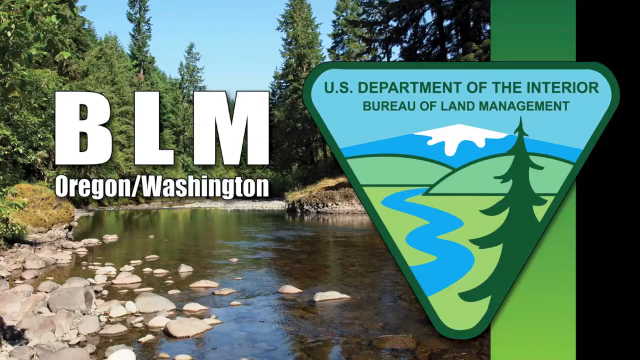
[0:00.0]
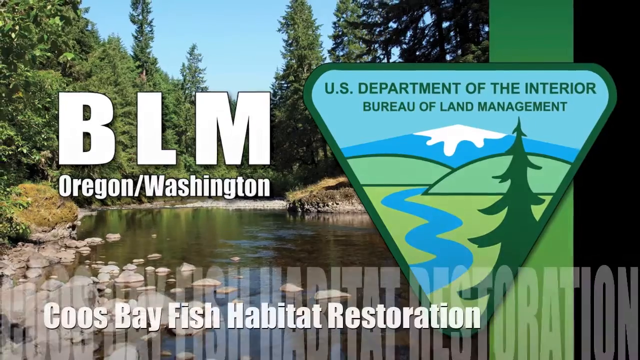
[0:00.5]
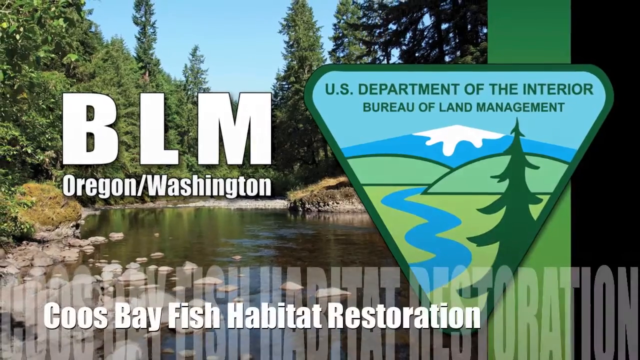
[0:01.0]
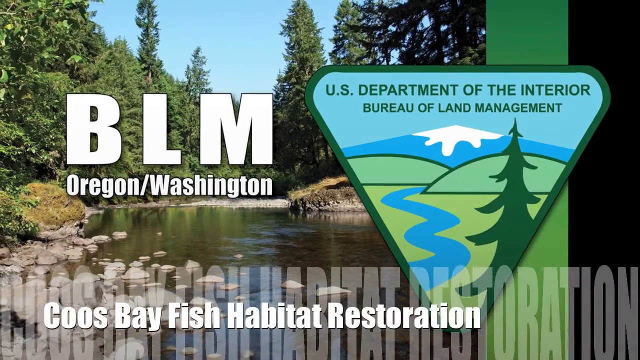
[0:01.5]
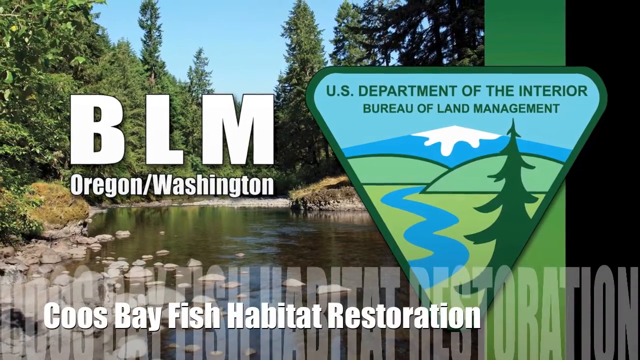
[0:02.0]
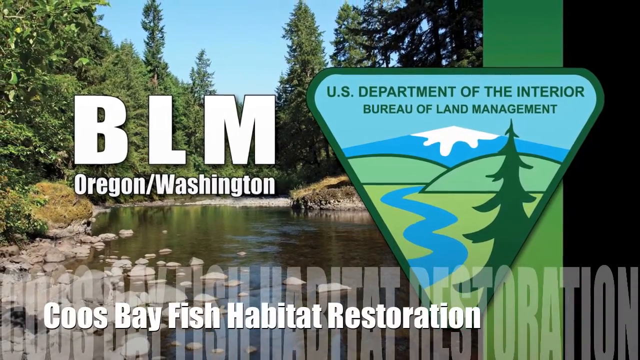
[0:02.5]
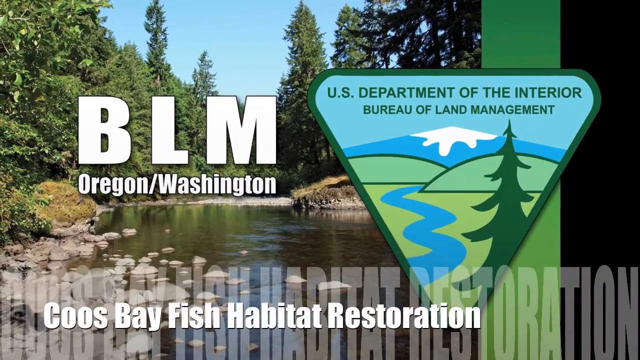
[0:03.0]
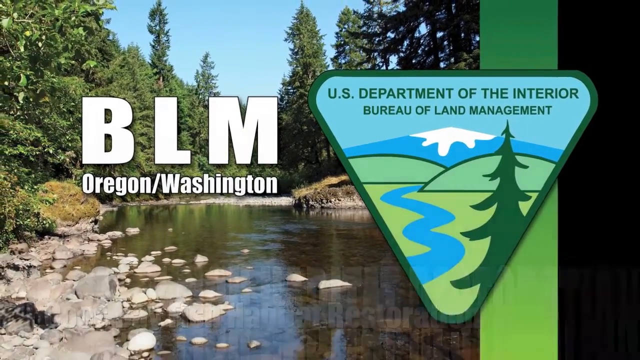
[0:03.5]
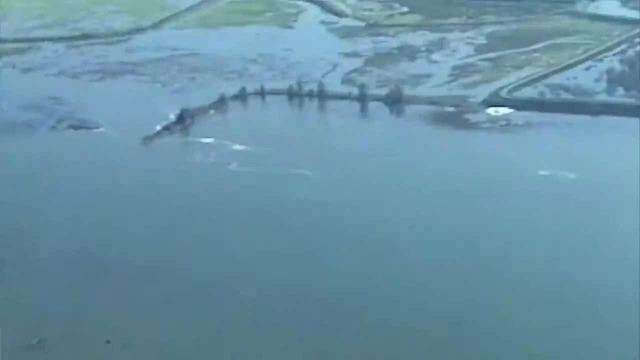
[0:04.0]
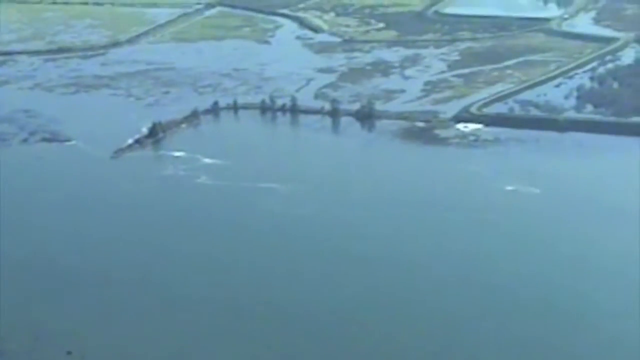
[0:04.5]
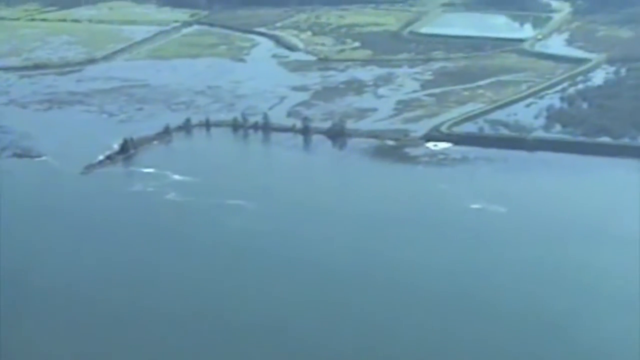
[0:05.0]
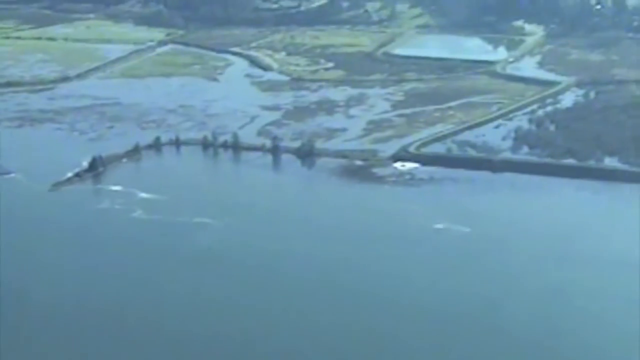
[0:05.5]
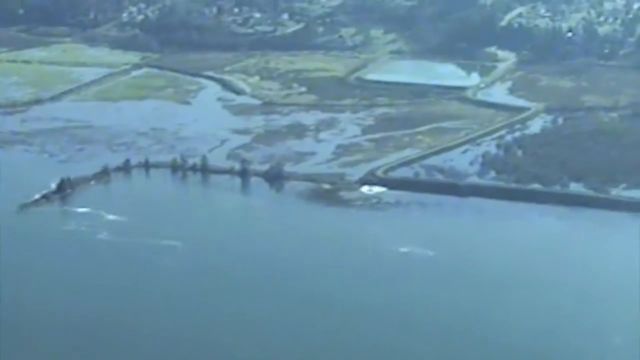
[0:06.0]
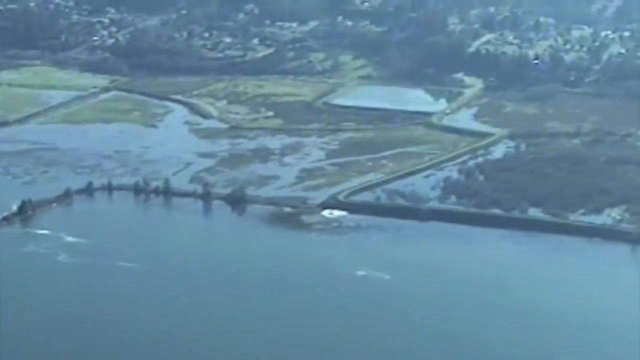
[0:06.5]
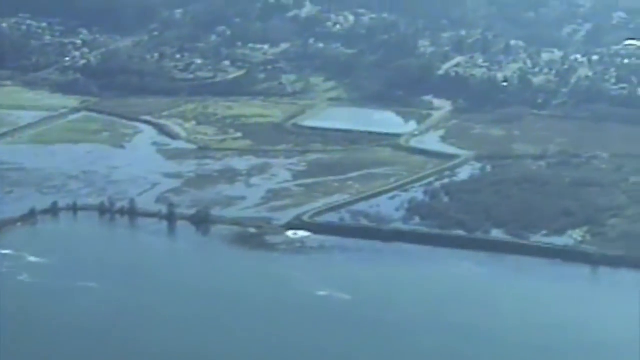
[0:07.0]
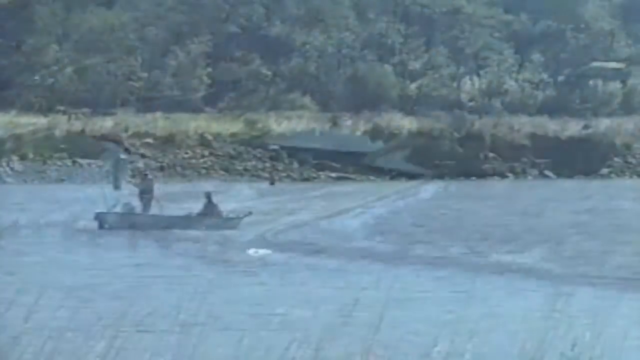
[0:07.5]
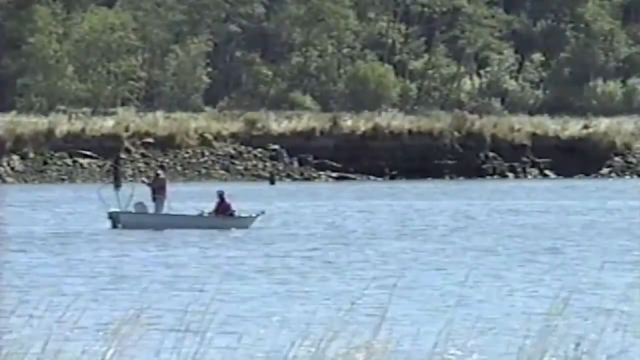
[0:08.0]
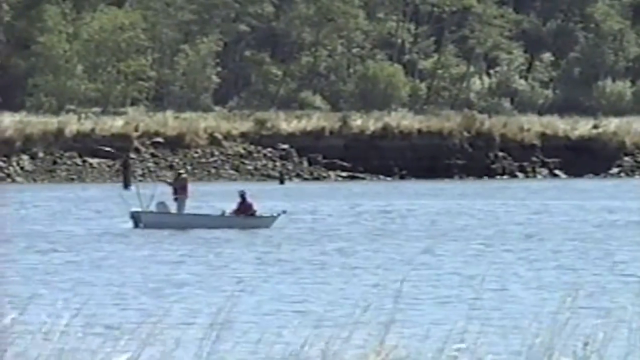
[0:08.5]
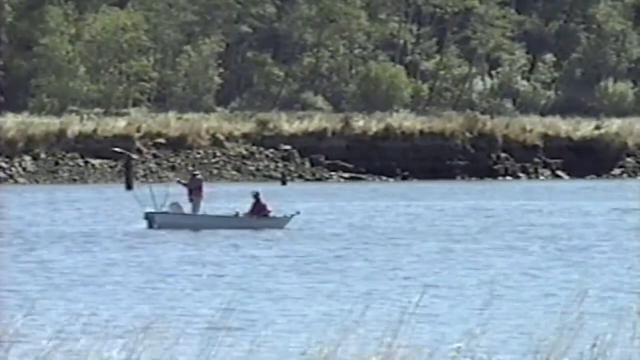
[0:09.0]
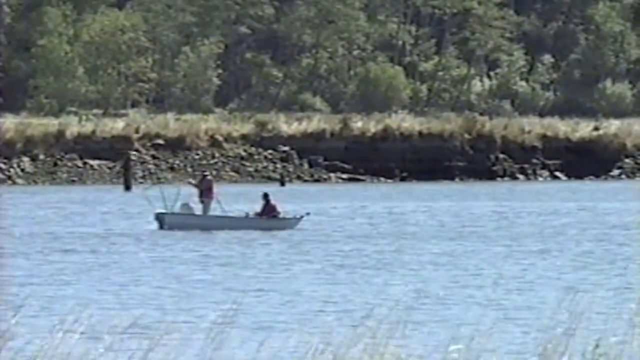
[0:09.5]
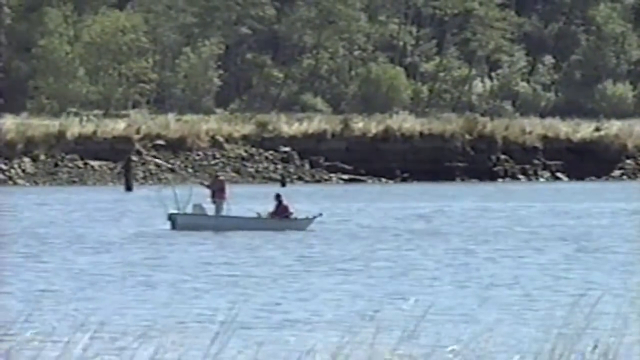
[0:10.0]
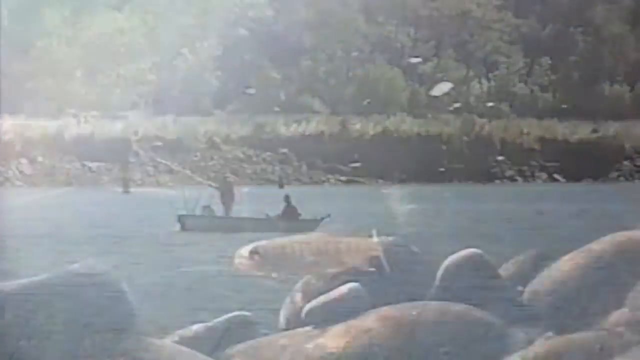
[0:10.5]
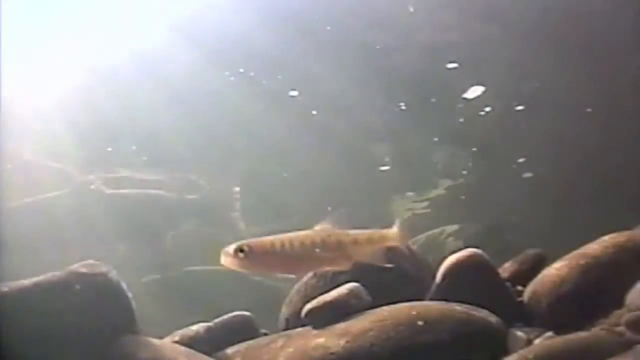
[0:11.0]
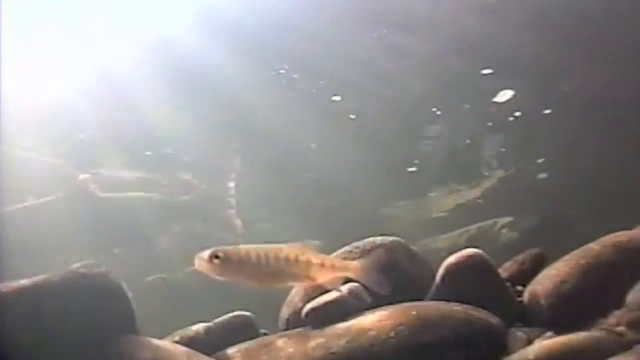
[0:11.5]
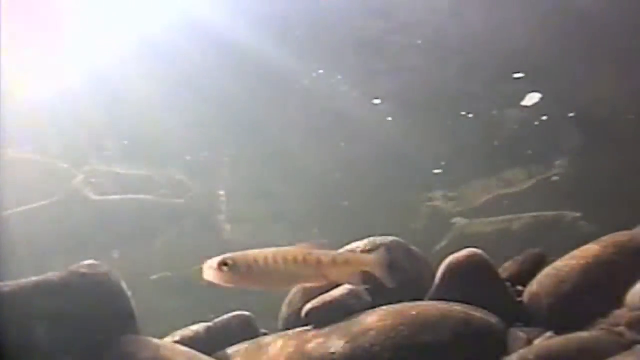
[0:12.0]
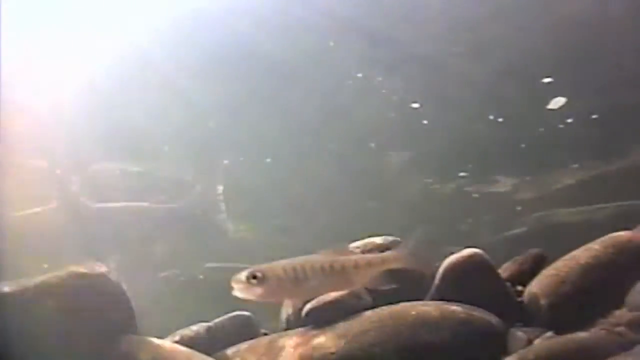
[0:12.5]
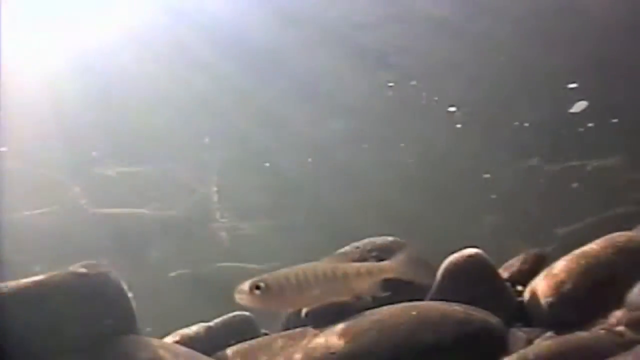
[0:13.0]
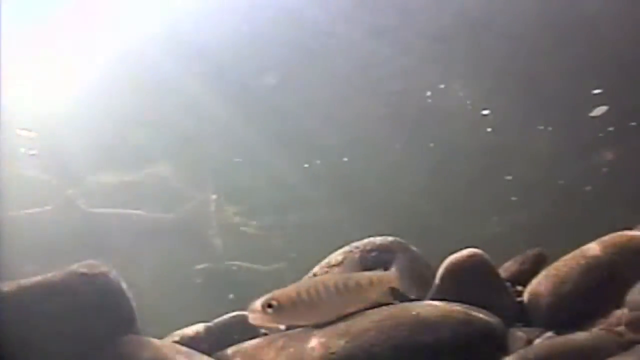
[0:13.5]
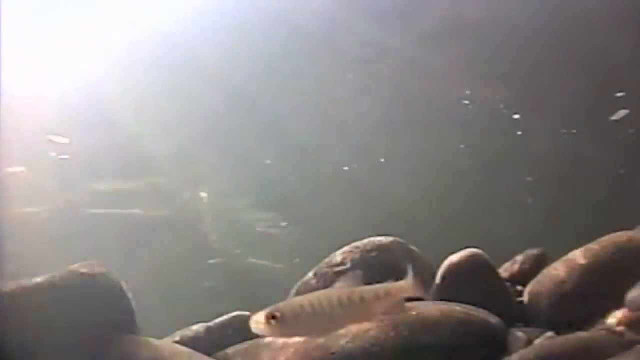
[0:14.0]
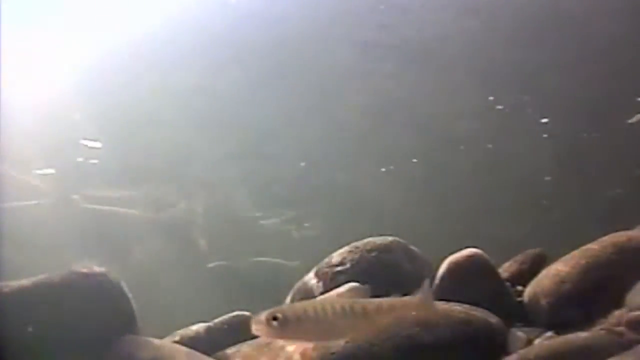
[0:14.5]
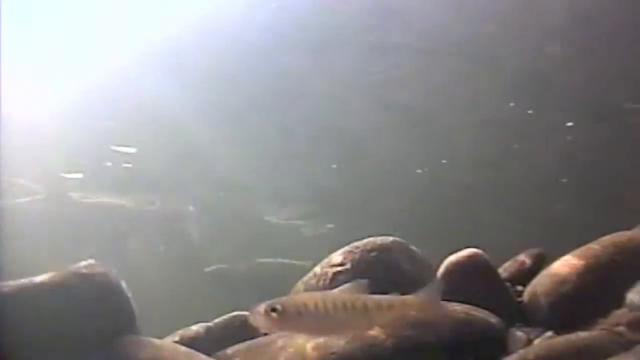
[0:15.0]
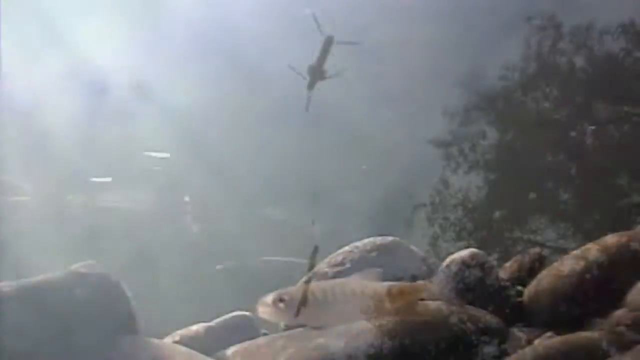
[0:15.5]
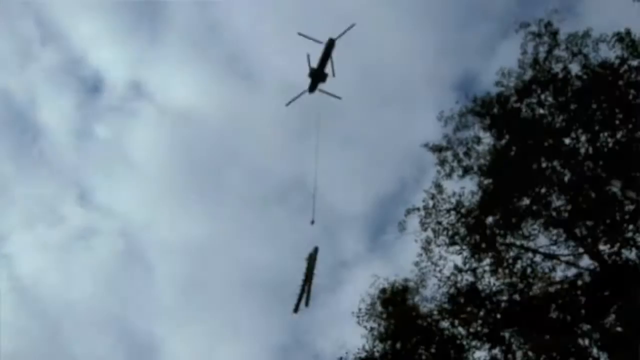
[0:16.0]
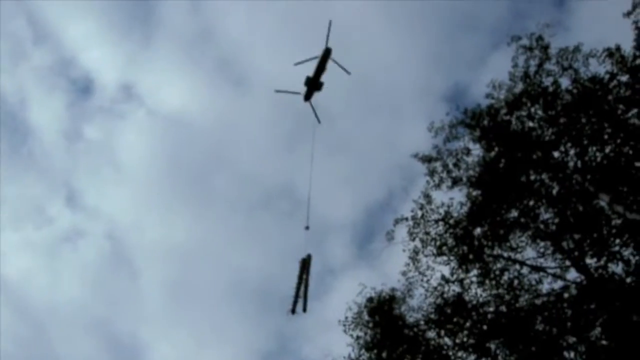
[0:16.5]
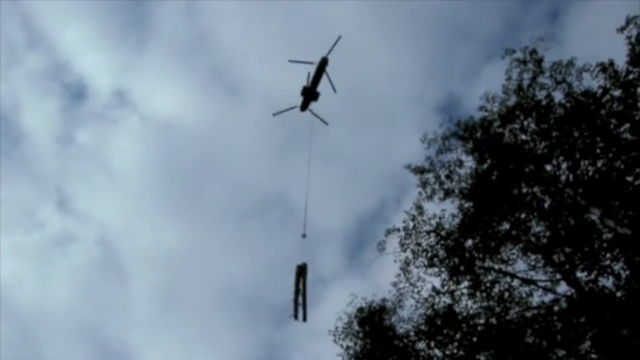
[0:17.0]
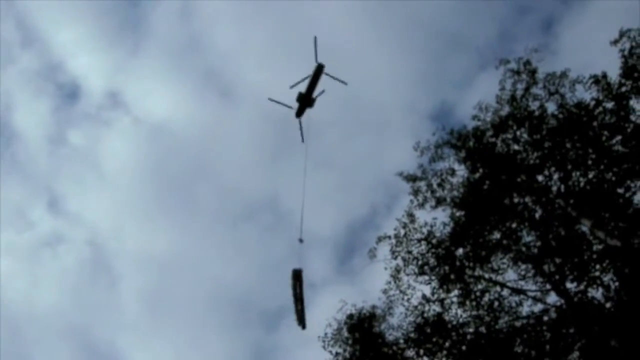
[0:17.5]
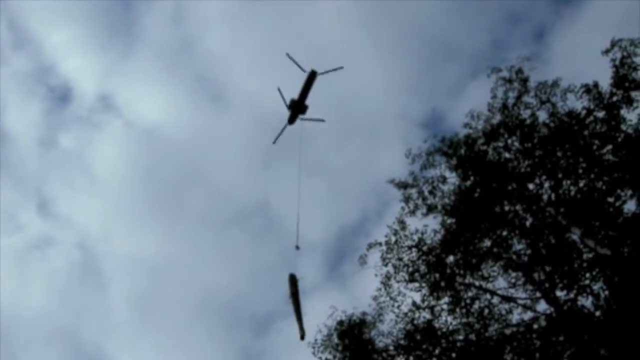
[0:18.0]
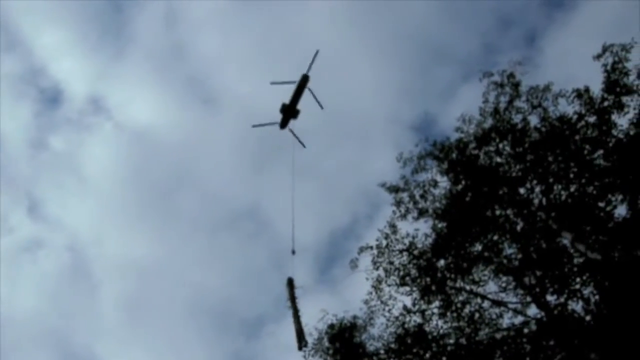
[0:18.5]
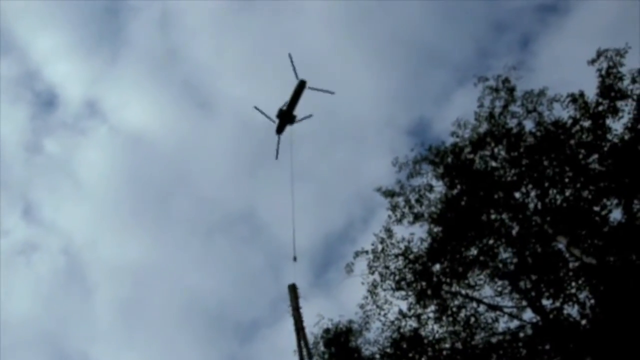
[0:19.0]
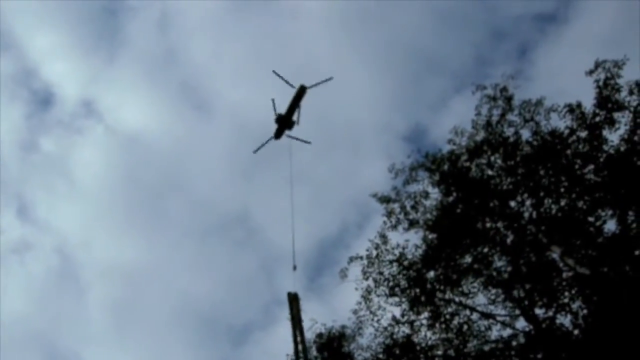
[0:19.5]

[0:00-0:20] This is BLM Oregon/Washington. A green triangular sign with a green border reads "U.S. Department of the Interior Bureau of Land Management." Inside the sign is a cartoon mountain in the hills with a river swiveling through it and a tree in the foreground. Text also reads "Coos Bay fish habitat restoration." The video then shifts to what looks to be an aerial shot of a flooded area; pieces of land are visible, but there is a lot of water and much of the land has been overcome with water. Next comes a shot of a river with two people in a boat fishing. The boat sails to the right. One person is sitting down in the boat, while the other, who looks to be a man, is standing up and fishing. They are far out of shot, so few details of them can be made out. Behind them, on the other side of the river, are grass, dirt and trees. The video cuts to an underwater shot: spherical, smooth rocks lie at the bottom, a translucent orange and gray fish swims in the water, and sun rays shine through the water. A helicopter with some sort of long object hanging from it is shown from below, looking up; the helicopter is almost a black silhouette against a cloudy sky.